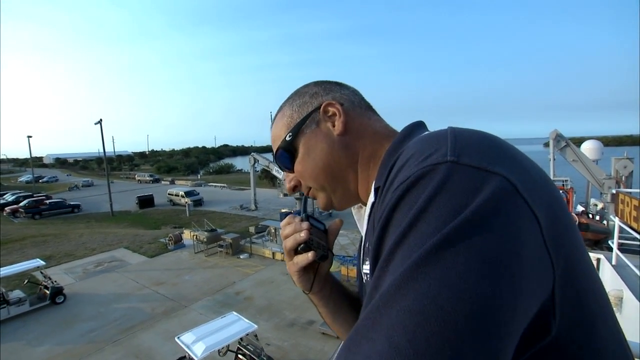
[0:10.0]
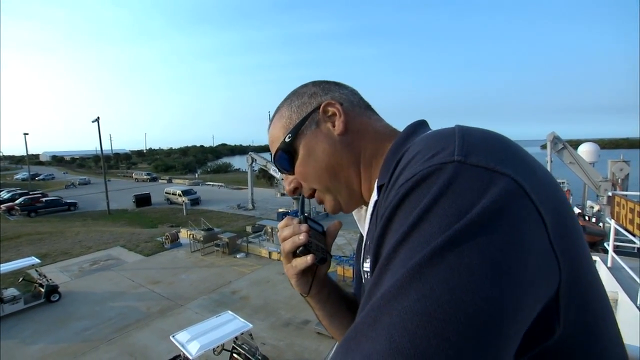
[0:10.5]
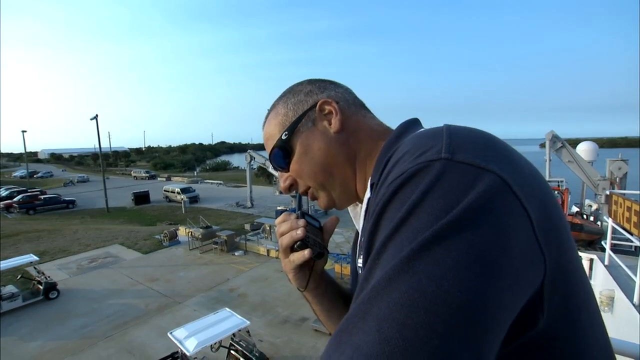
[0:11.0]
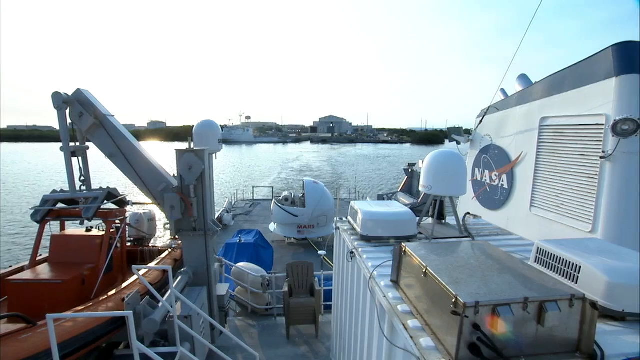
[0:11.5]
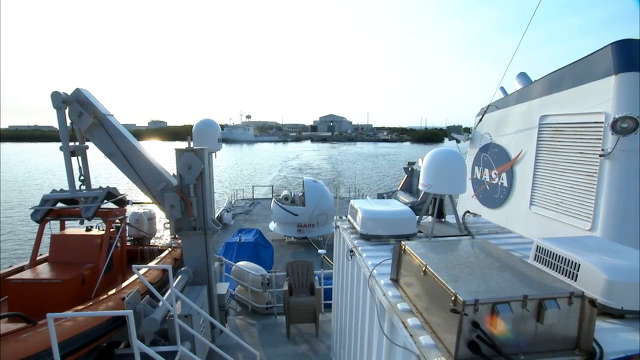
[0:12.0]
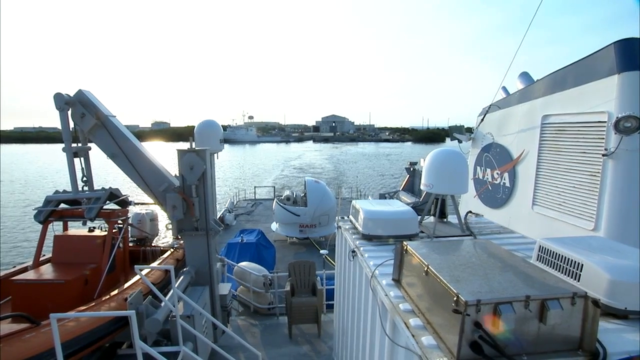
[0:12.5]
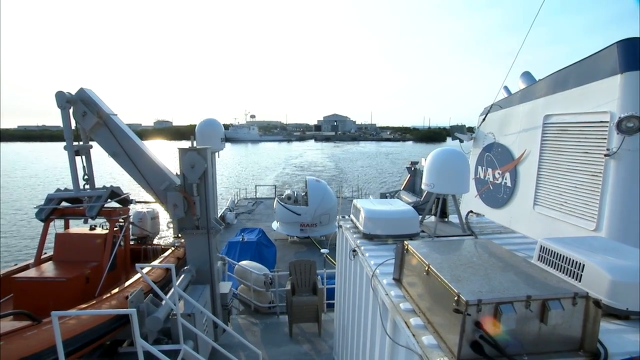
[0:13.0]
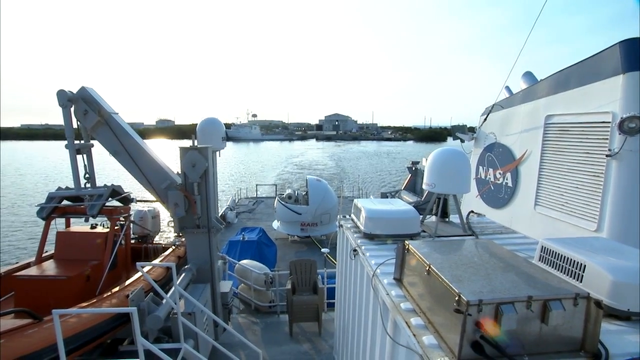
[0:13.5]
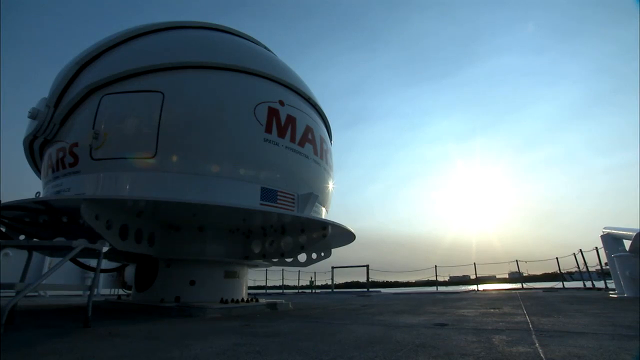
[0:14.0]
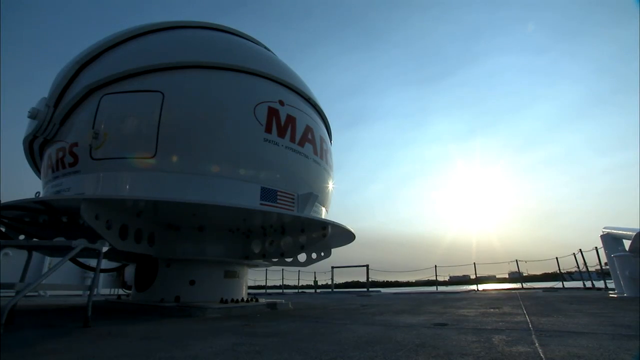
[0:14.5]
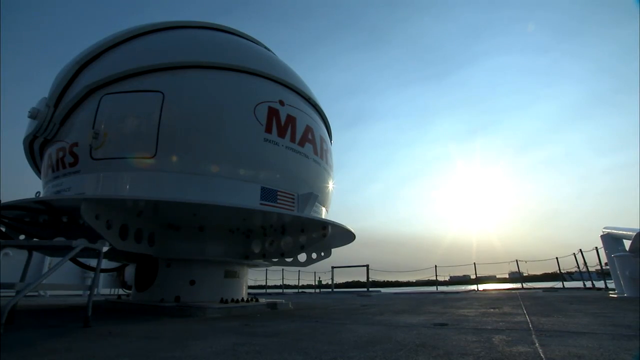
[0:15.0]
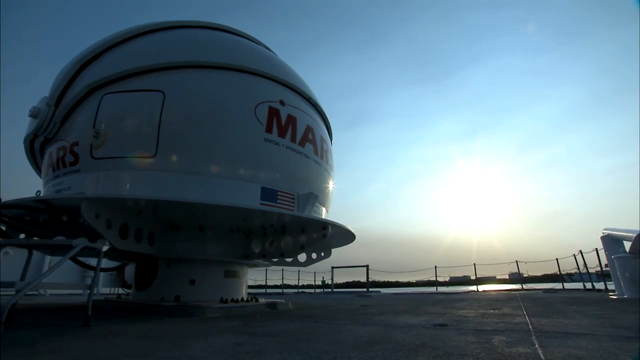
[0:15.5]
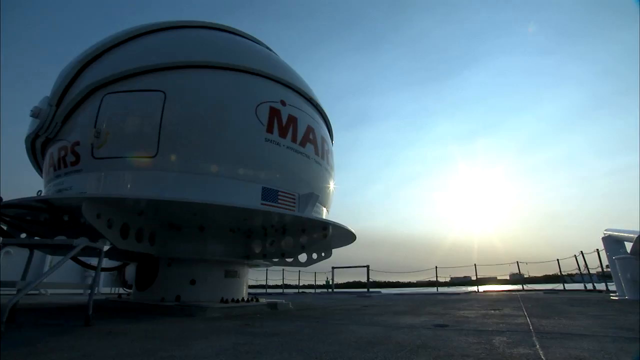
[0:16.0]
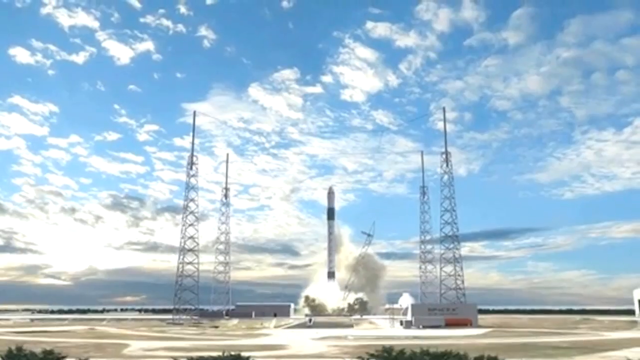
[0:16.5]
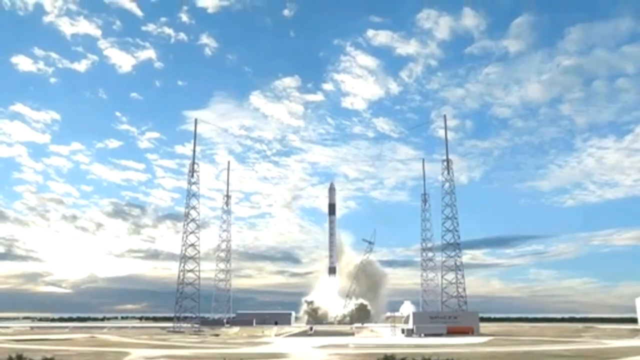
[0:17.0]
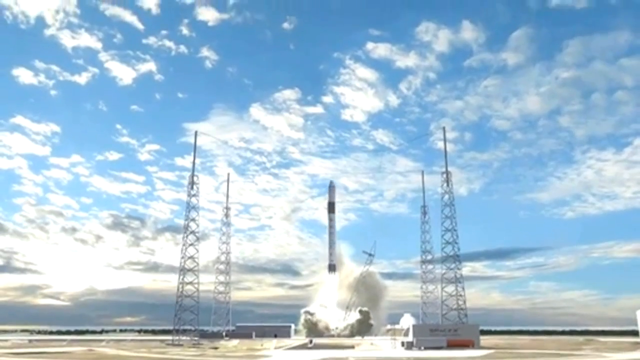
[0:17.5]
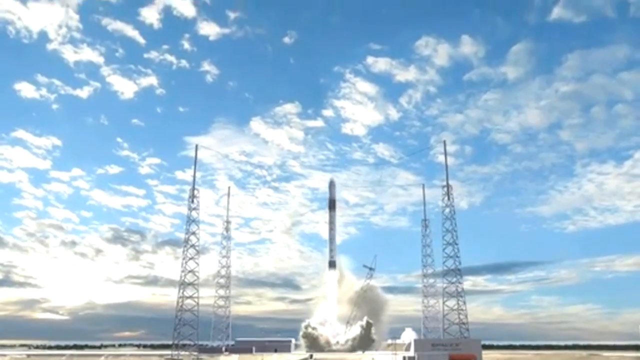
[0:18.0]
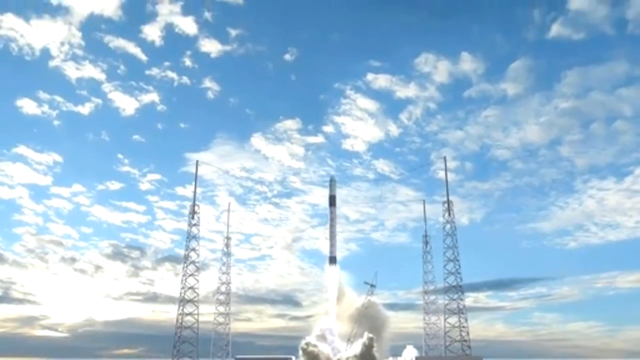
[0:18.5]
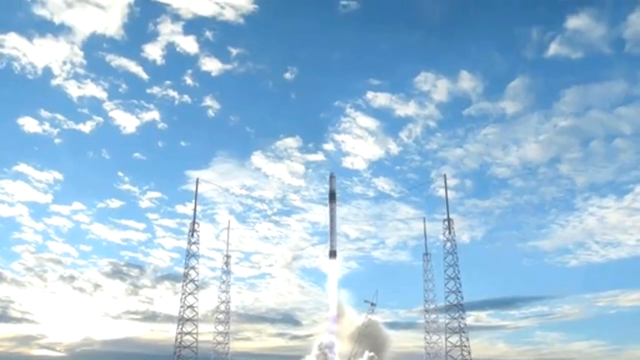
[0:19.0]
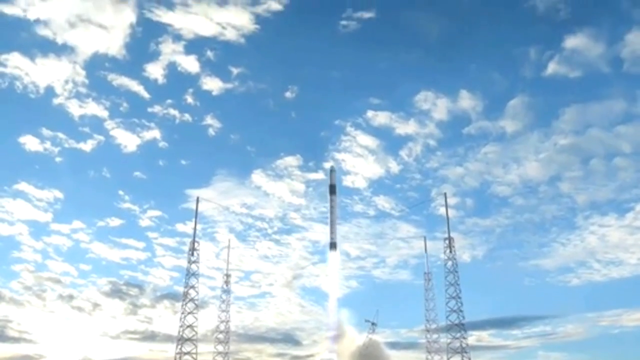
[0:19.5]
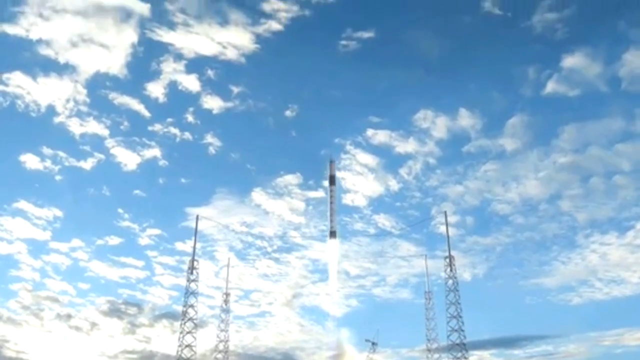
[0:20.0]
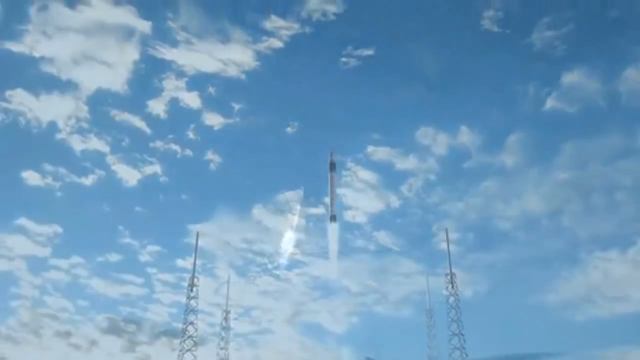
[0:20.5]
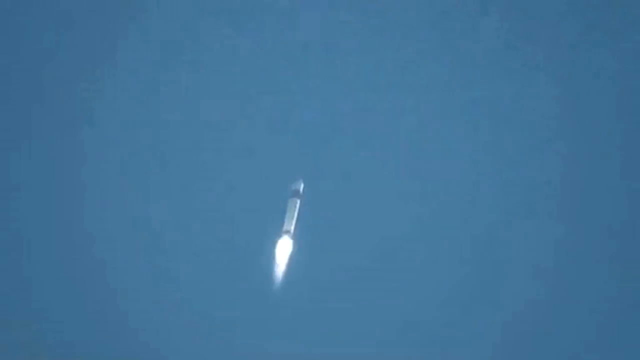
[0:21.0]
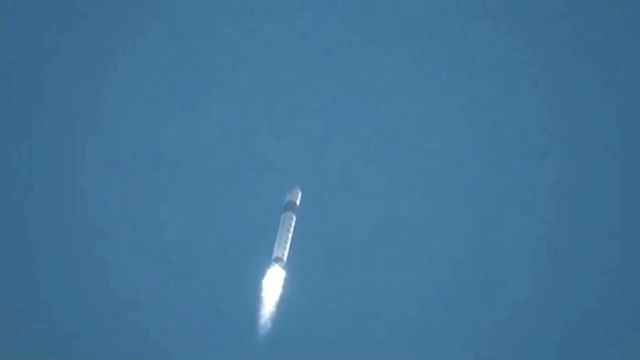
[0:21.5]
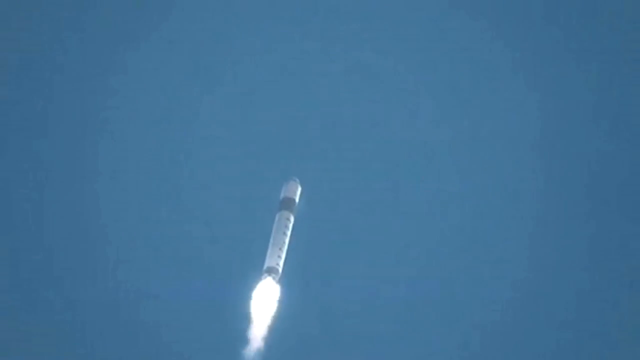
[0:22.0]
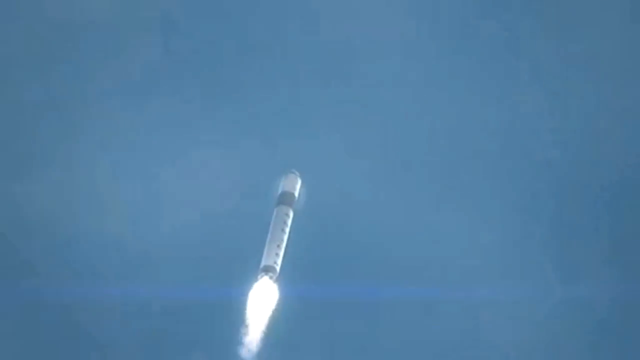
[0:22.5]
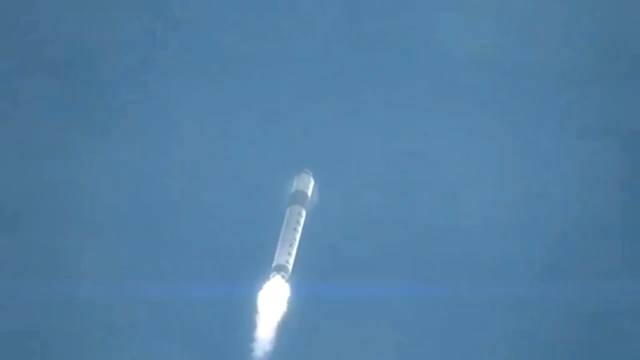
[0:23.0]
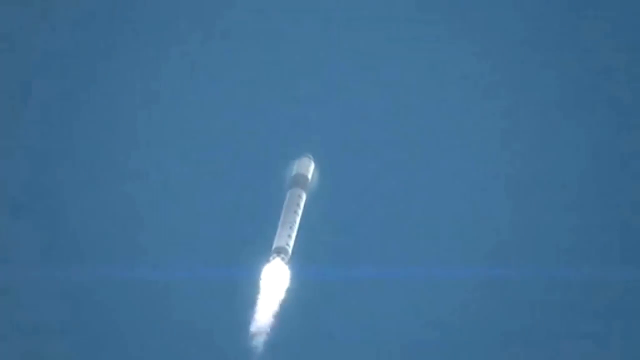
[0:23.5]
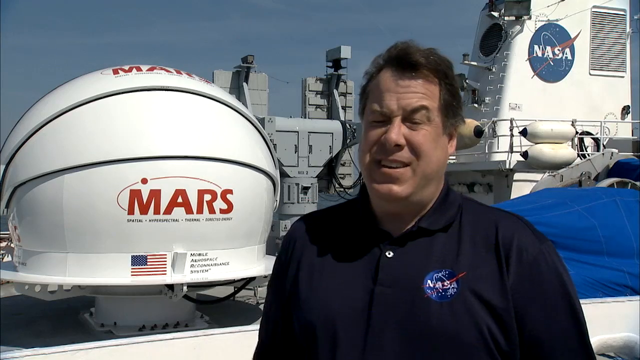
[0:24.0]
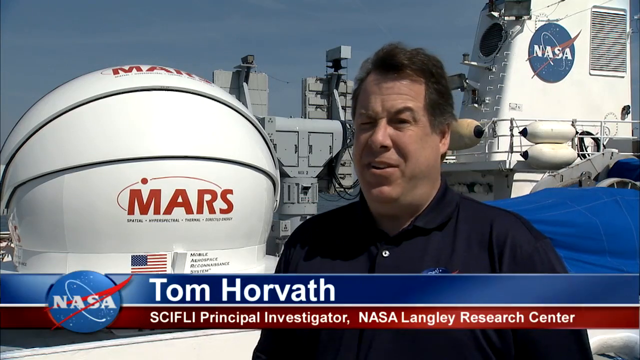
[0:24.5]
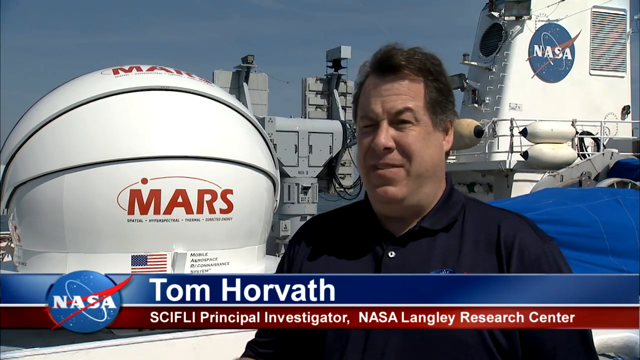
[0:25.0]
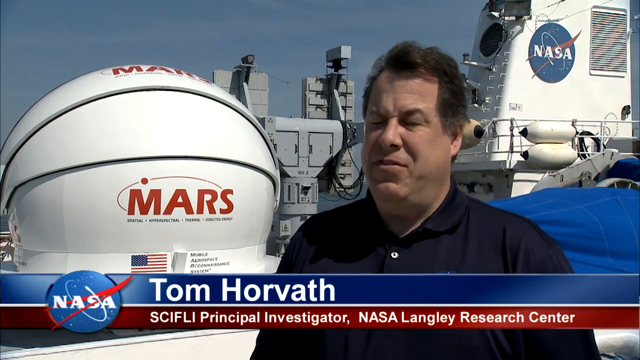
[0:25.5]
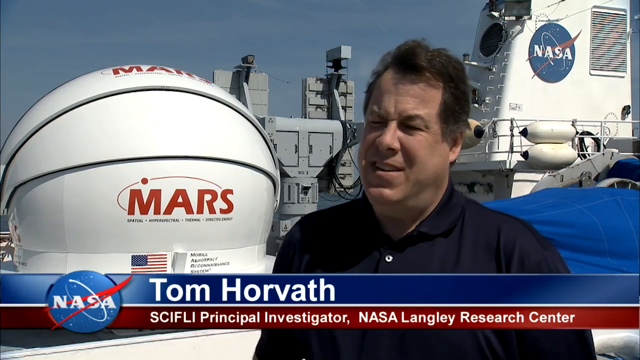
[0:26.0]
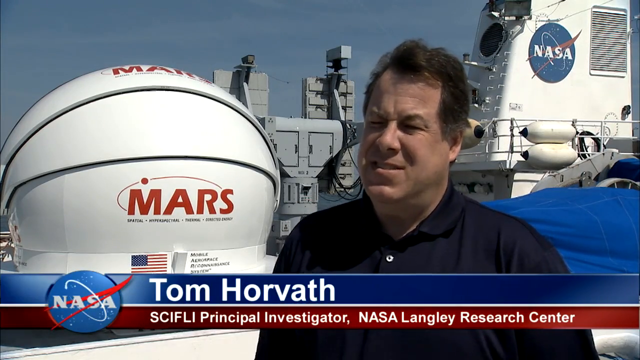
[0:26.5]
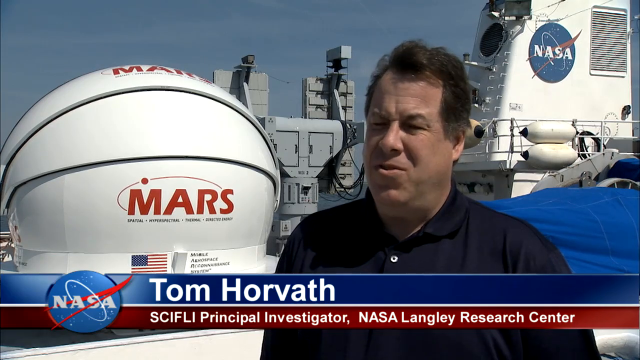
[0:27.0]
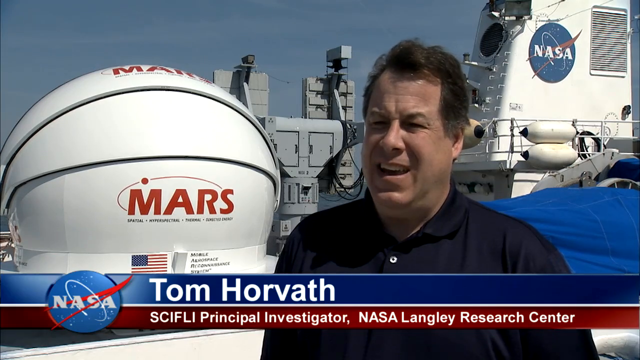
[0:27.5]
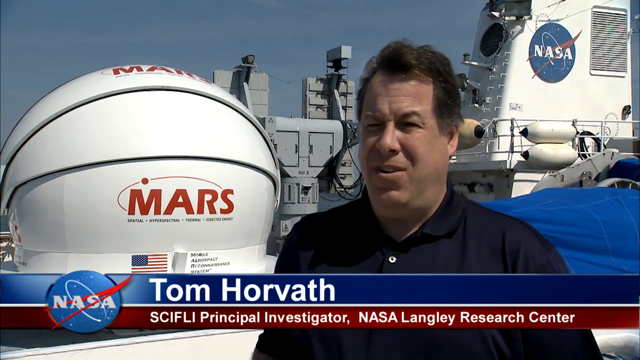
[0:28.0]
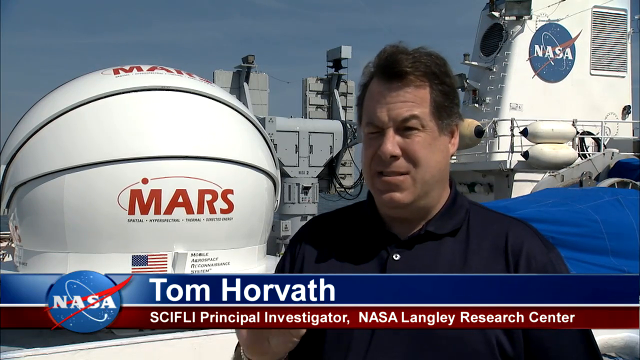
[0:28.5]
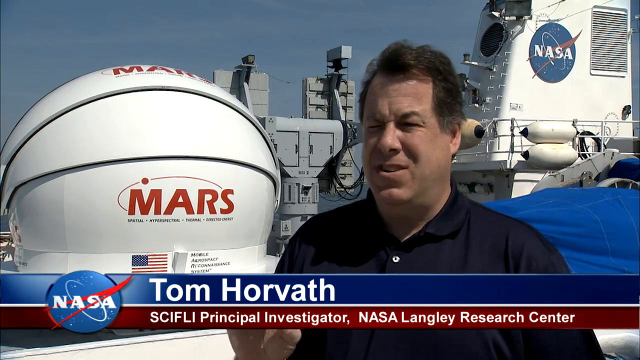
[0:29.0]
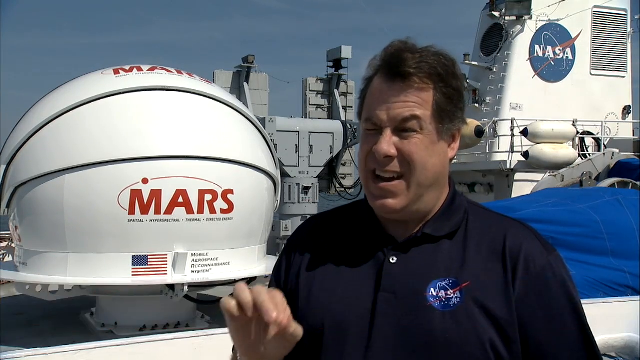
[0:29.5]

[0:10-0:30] The view changes to the ship itself, which has some things on it, apparently including a little NASA logo on some of the white part. Then a white dome appears with some letters on its side that cannot really be made out; it looks kind of like sunset, with the right side illuminated by a bright light against the blue sky. A very thin rocket takes off with two towers on either side of it, under a blue sky with lots of puffy clouds, and the camera follows the rocket up. Another view shows the rocket much further up in the sky, with just blue around it. A man then stands in front of one of the white domes, which says "Mars" in big red capital letters. He wears a buttoned-up dark blue polo shirt, has black hair, is kind of squinting in the sun, is a little overweight and is probably about in his 50s, and he is talking. Behind him are the white ship and the little NASA logo on it. A blue banner across the bottom reads "Tom Horvath" in white text, and beneath it a red text band identifies him as the principal investigator and gives some of his credentials. The NASA logo, a blue circle with a red swoosh and white NASA letters, is on the left.